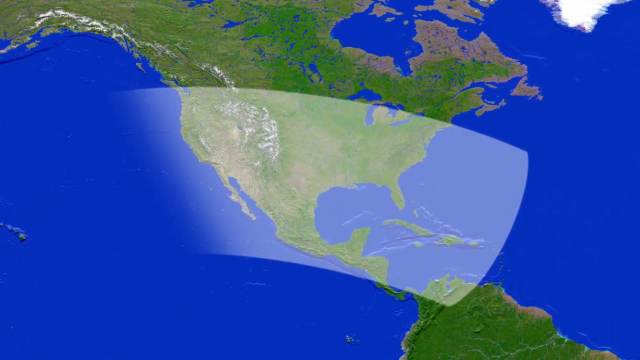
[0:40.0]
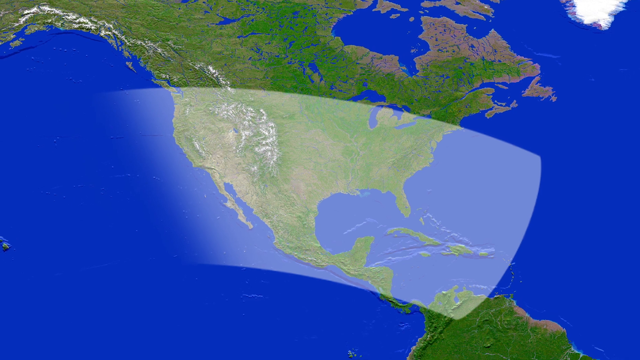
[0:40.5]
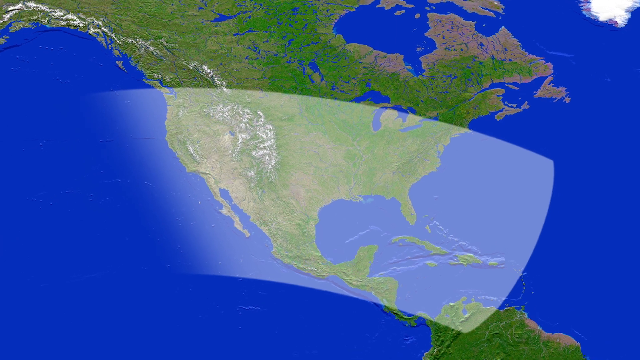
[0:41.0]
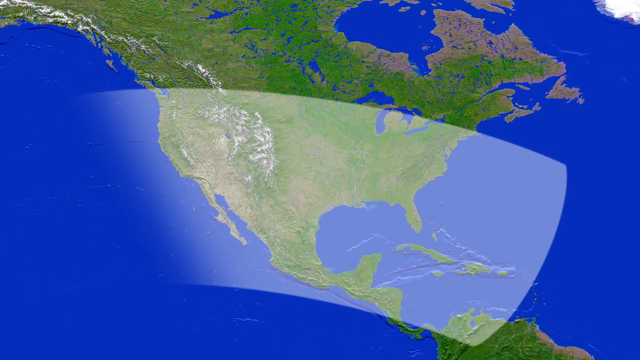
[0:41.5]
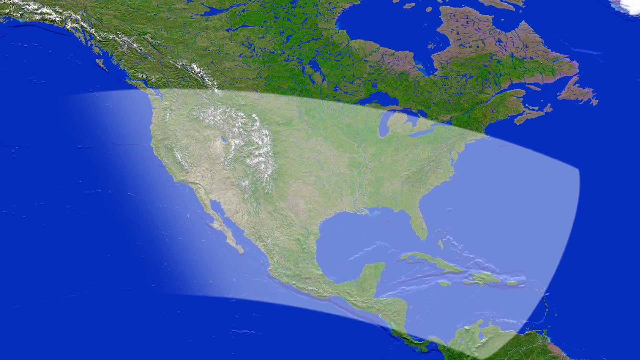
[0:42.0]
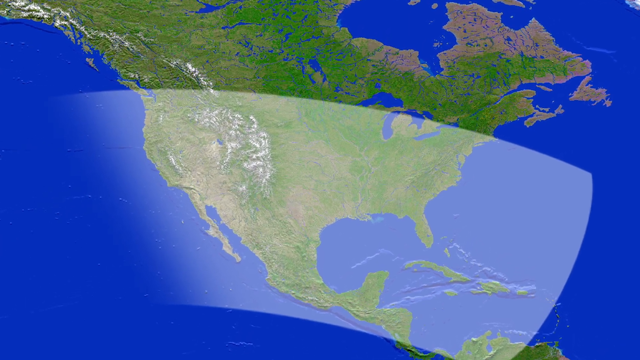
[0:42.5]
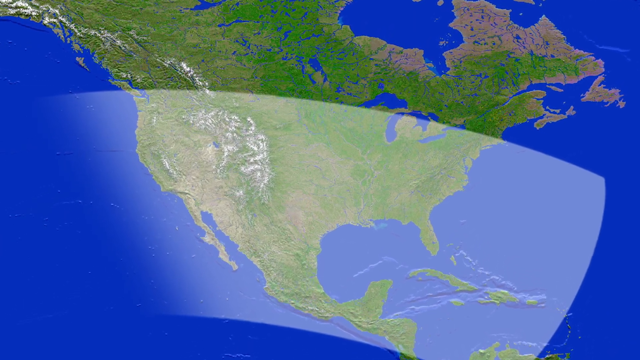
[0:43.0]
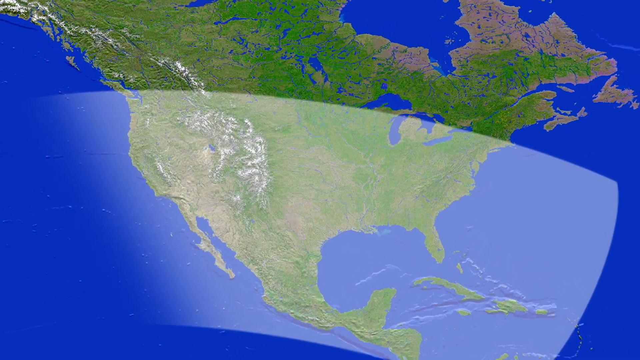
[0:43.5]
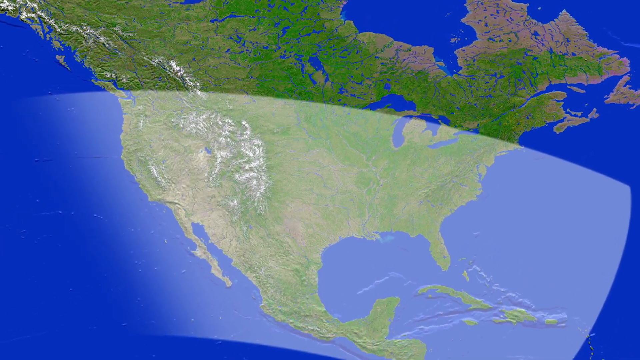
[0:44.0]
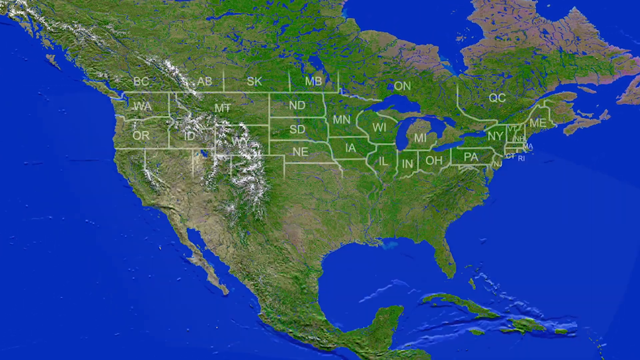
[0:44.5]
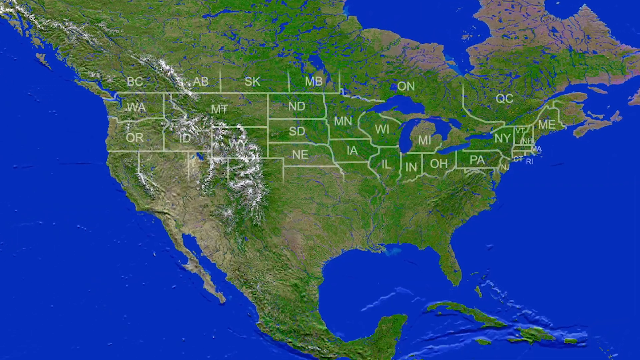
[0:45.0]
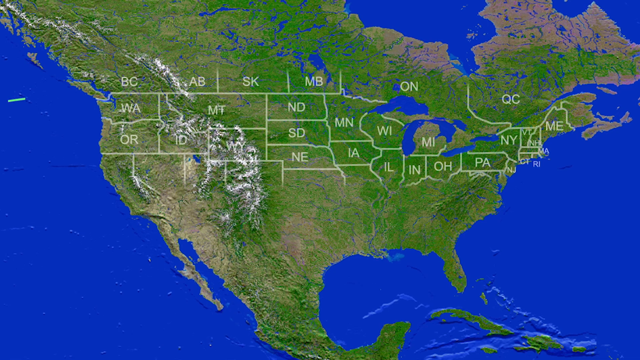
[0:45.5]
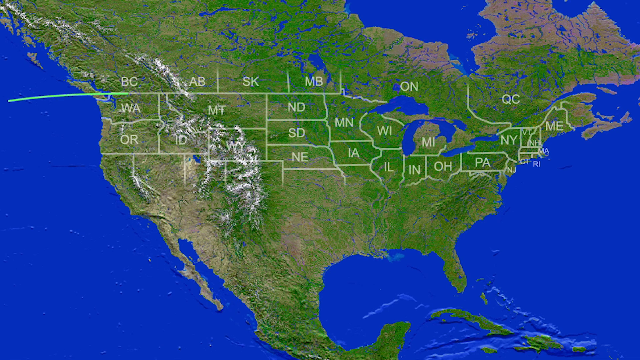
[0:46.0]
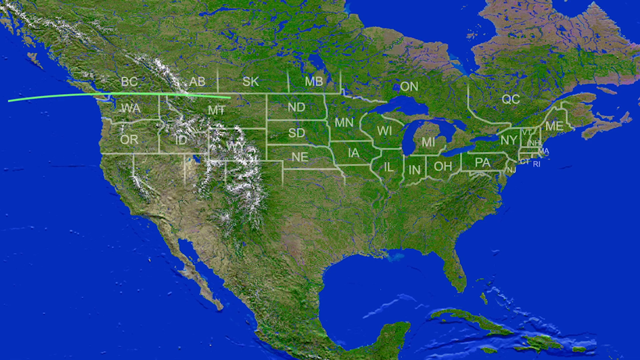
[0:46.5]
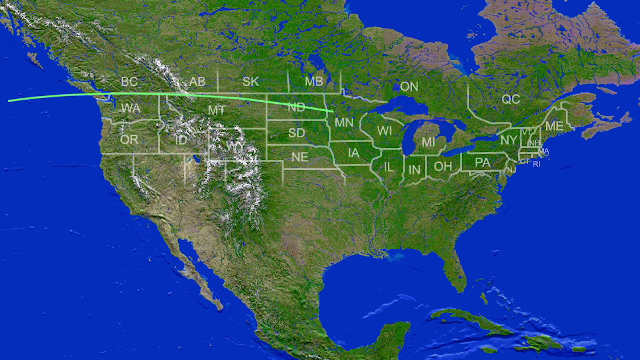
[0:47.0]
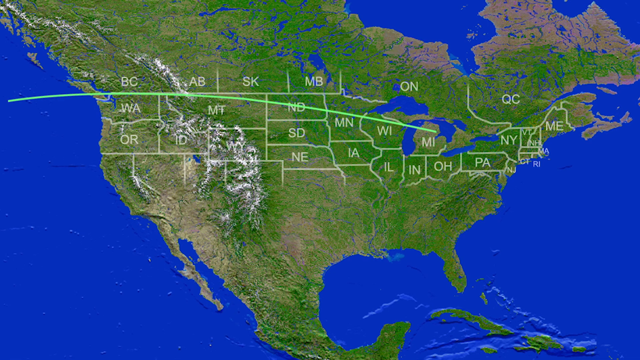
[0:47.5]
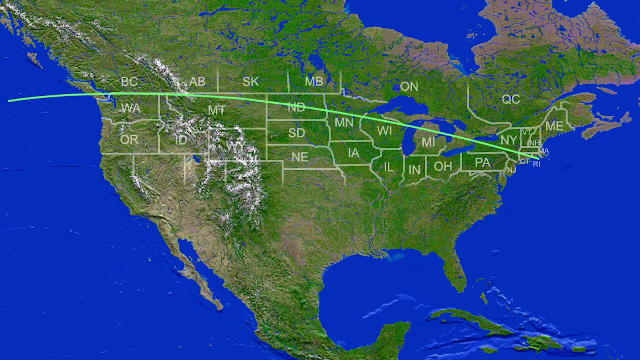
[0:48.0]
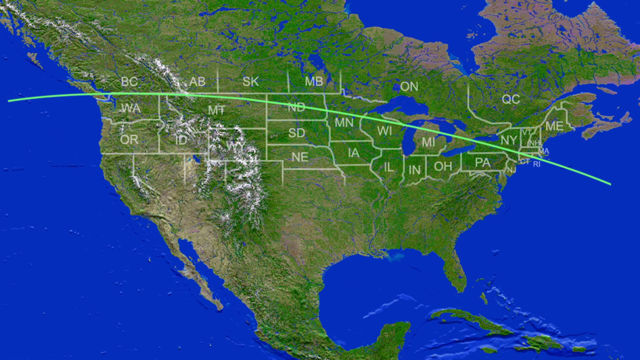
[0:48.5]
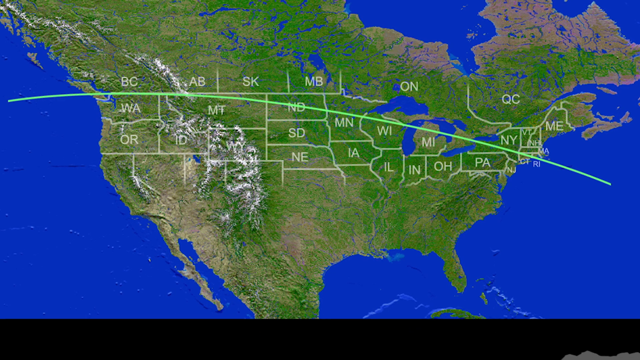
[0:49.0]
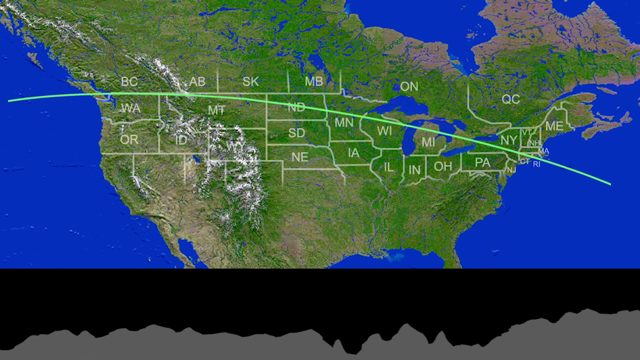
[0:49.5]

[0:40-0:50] A map of the United States shows a white layer covering the entire outline of the U.S. and the rest of North America, including Michigan. A green line runs through the United States. The other areas are dark and blue.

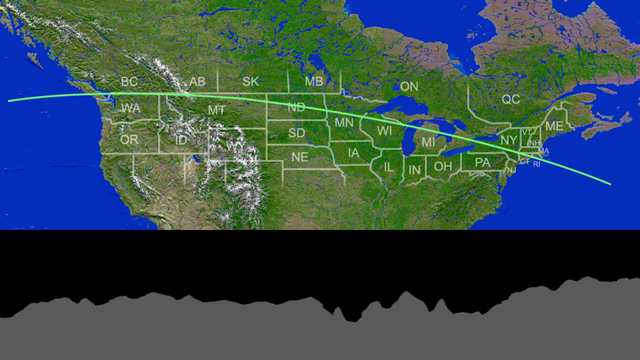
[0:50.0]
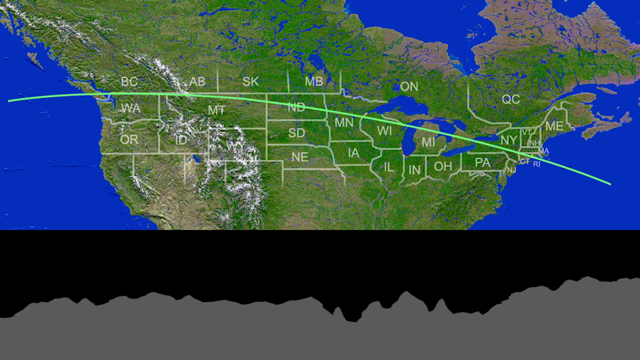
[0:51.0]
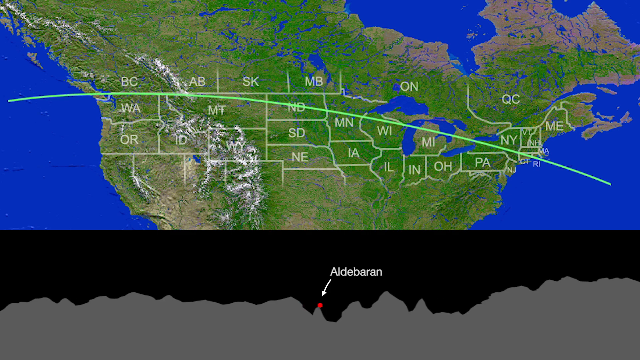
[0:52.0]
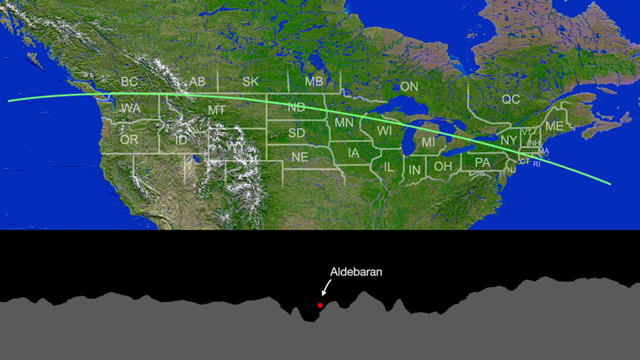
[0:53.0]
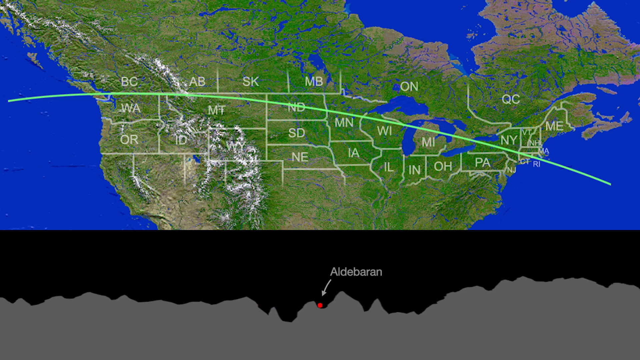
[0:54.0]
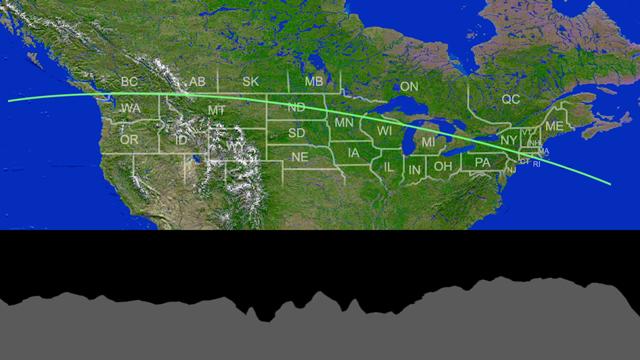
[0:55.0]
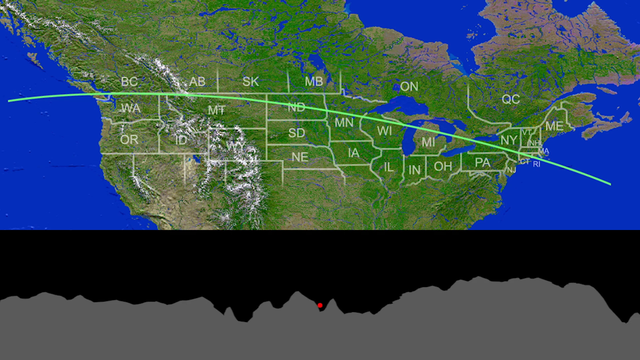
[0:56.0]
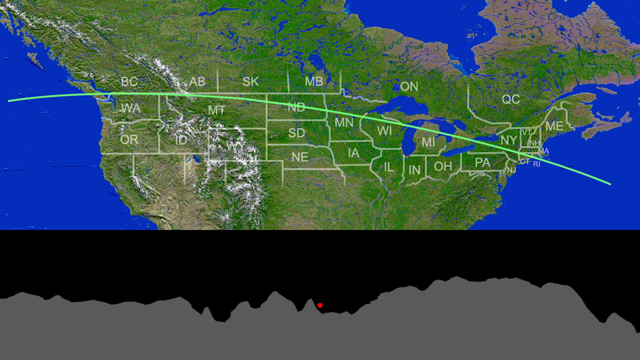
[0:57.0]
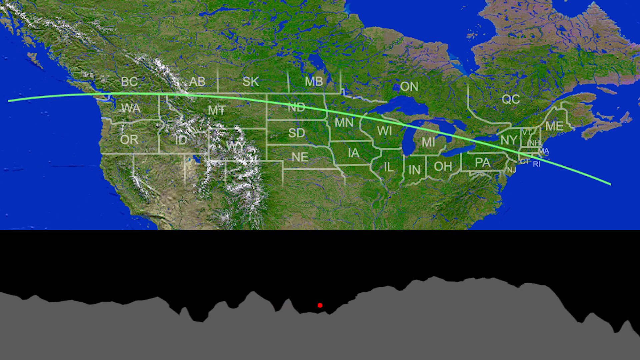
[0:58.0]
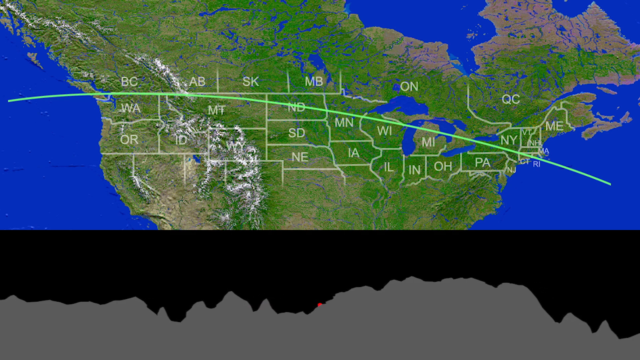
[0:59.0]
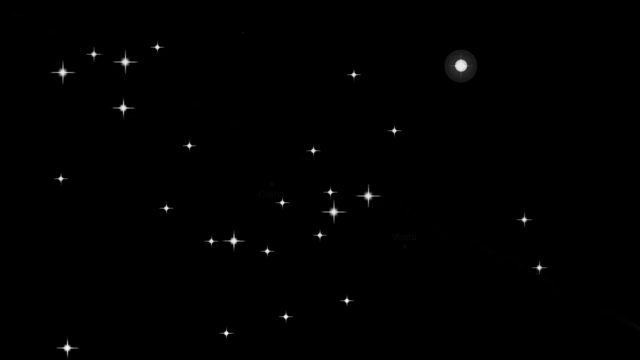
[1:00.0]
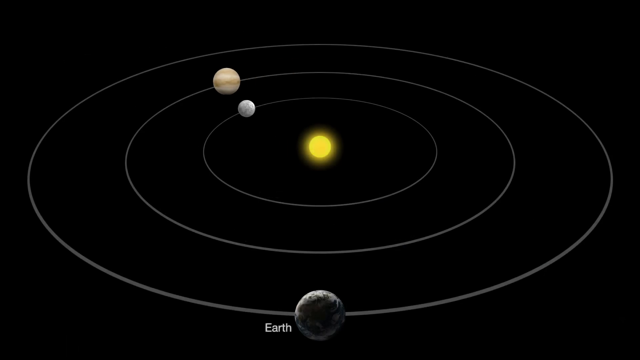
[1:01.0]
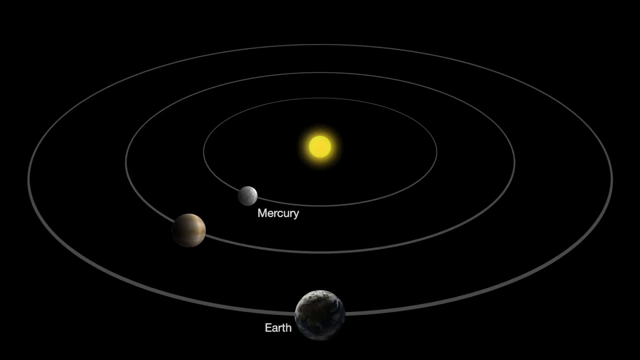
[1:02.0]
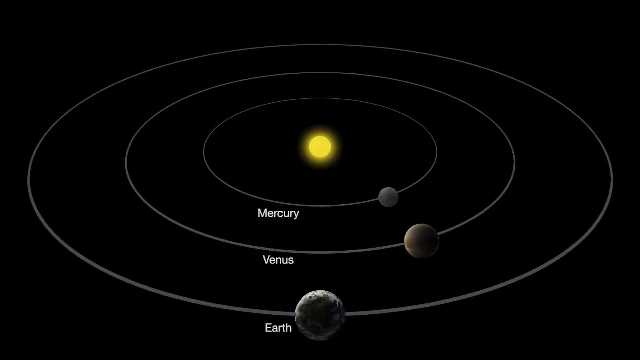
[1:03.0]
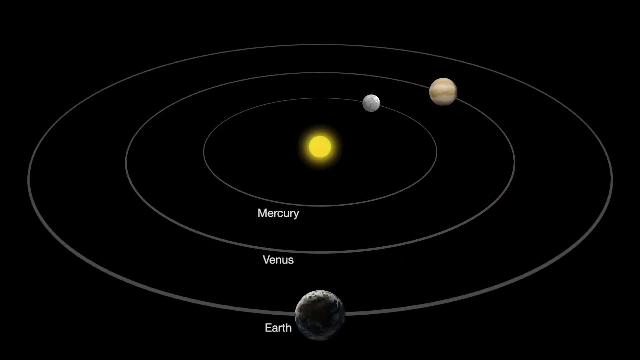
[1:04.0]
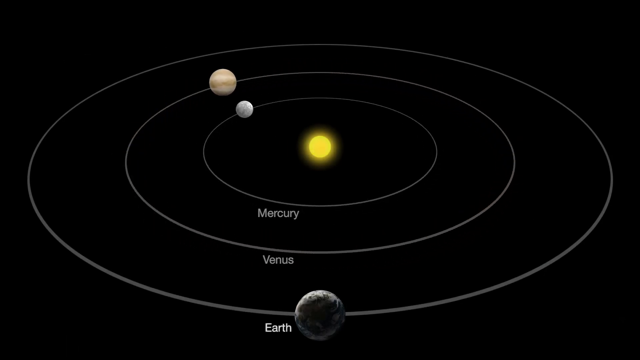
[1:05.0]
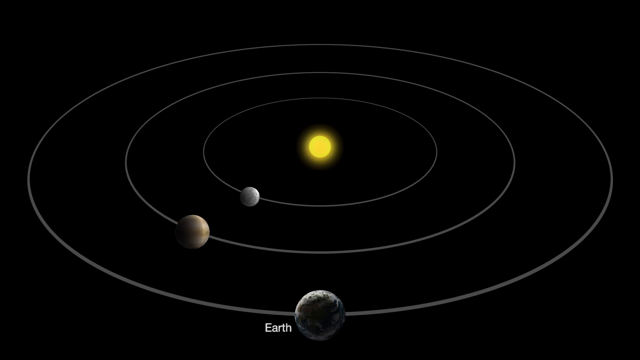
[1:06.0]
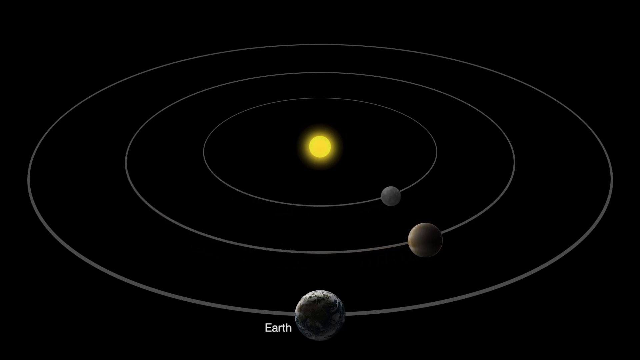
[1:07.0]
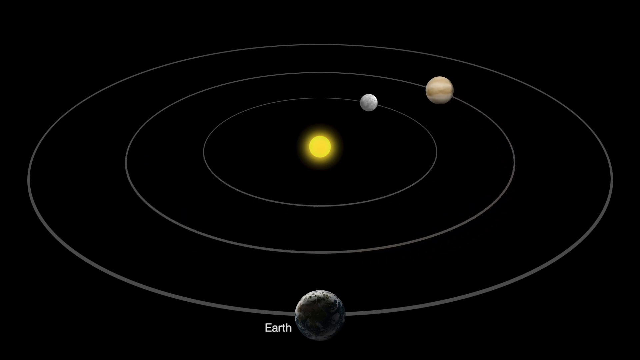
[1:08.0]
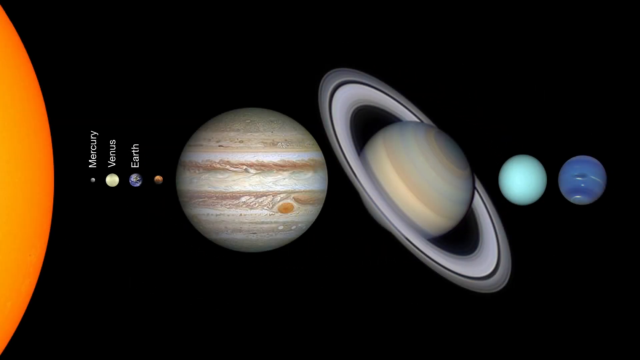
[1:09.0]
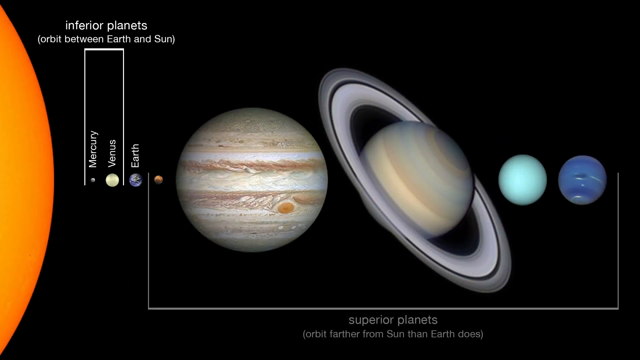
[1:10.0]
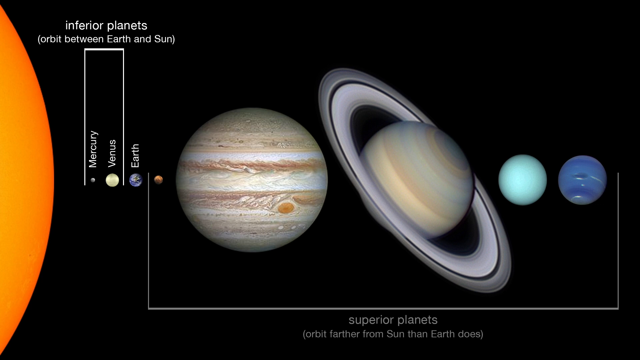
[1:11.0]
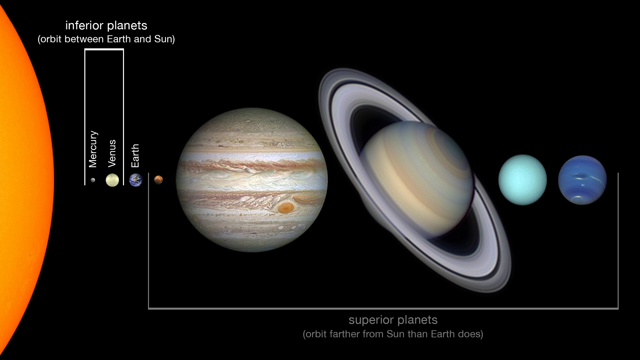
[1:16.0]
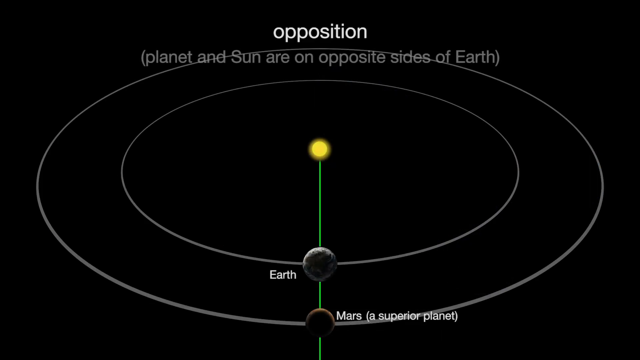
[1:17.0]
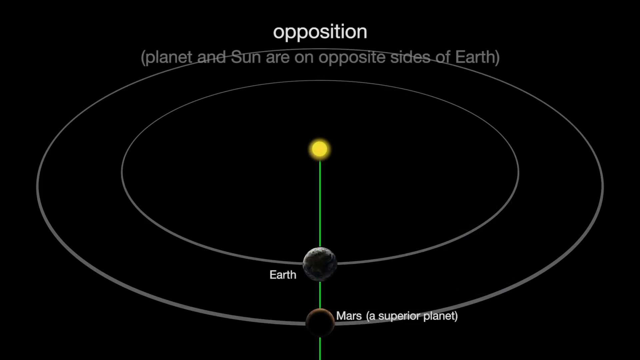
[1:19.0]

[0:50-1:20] The map covers Greenland and the upper part of the United States, from Washington through Montana up to Wisconsin and Michigan. Then a black area shows the Earth, Mars and Uranus revolving around the Sun, with Mercury on the left-hand side.